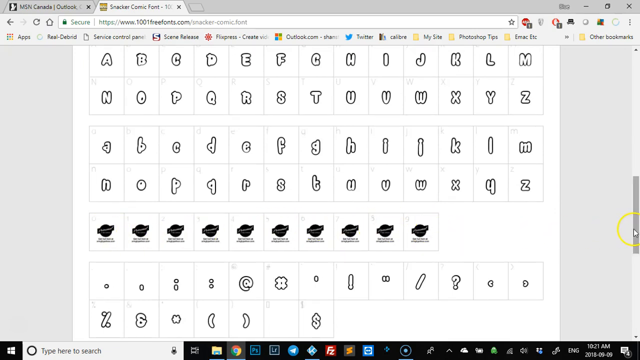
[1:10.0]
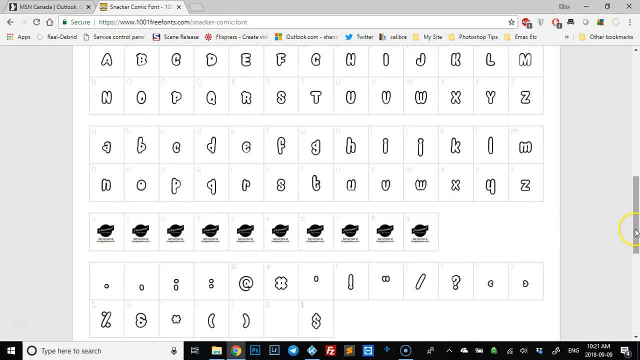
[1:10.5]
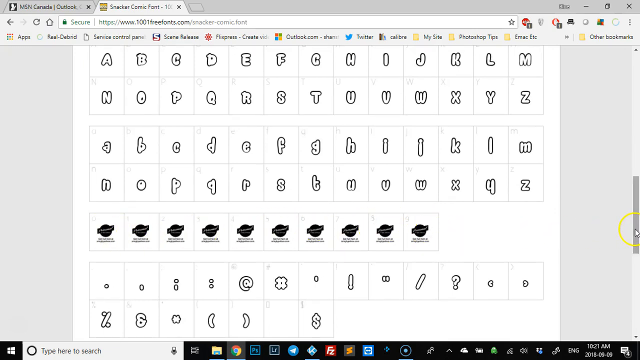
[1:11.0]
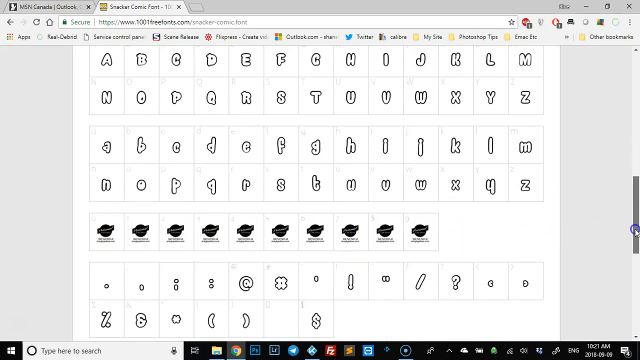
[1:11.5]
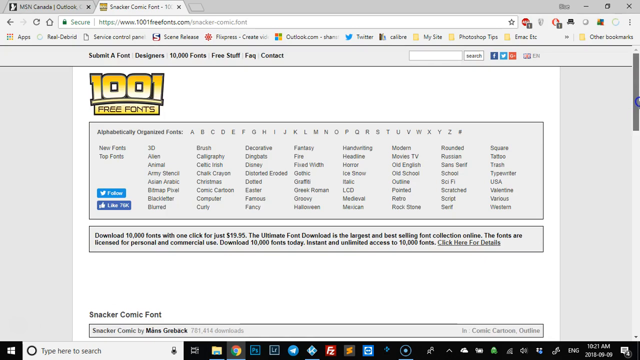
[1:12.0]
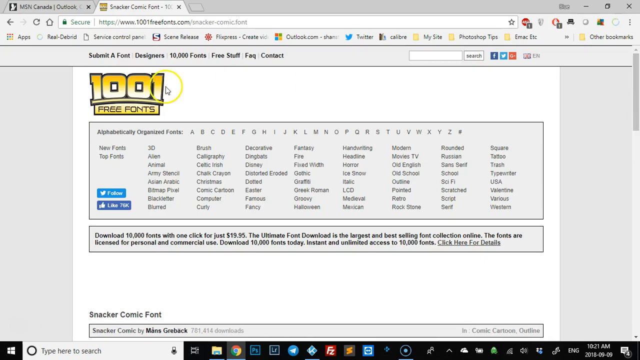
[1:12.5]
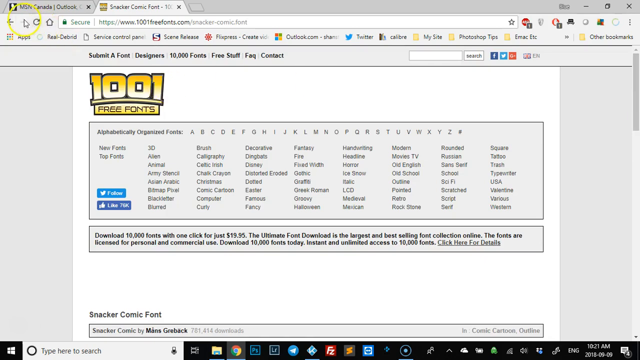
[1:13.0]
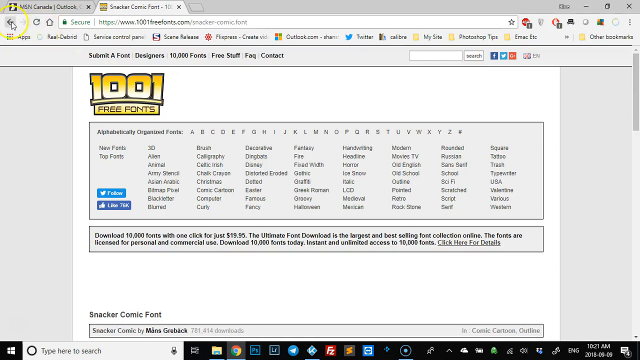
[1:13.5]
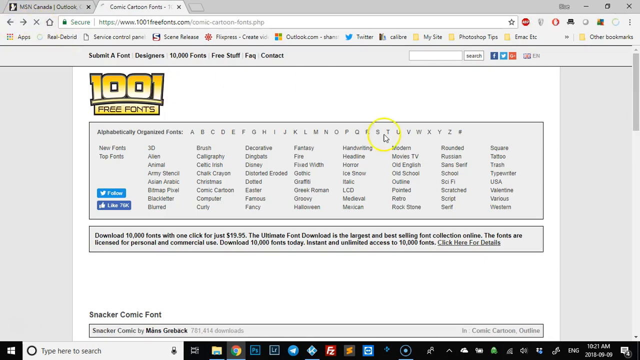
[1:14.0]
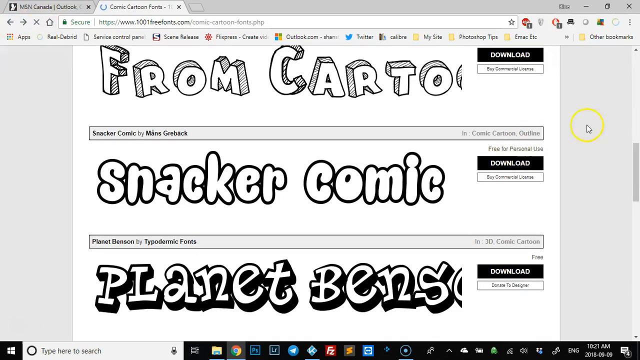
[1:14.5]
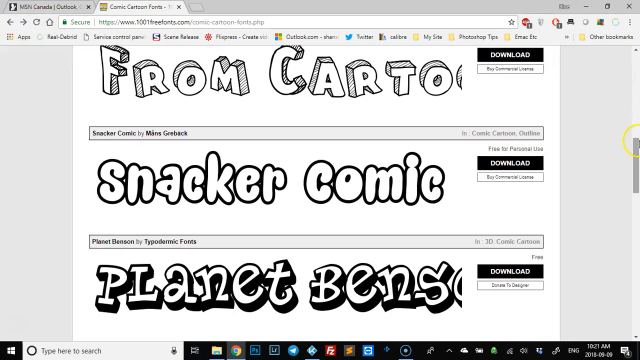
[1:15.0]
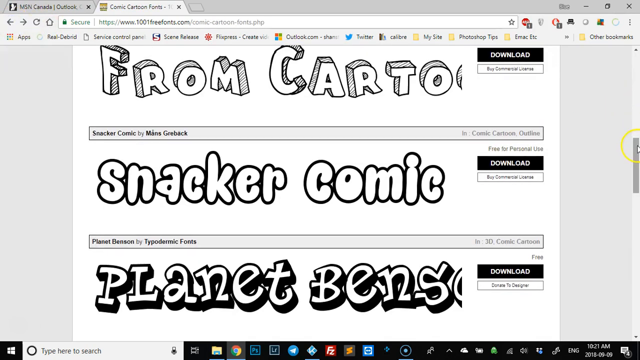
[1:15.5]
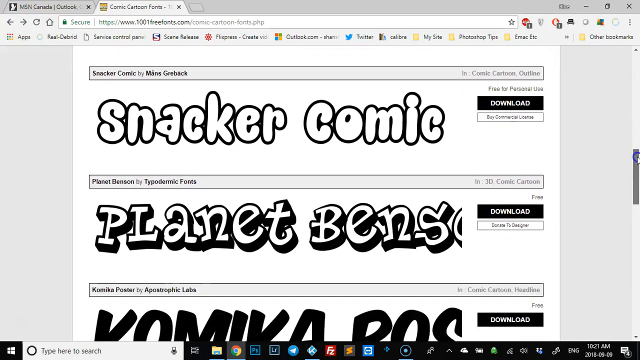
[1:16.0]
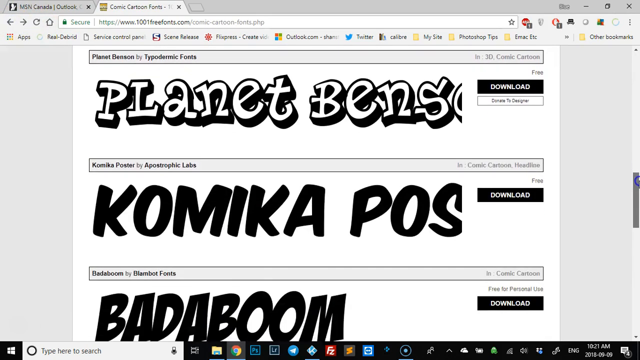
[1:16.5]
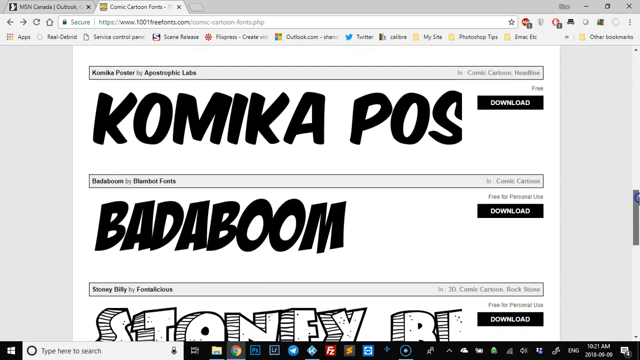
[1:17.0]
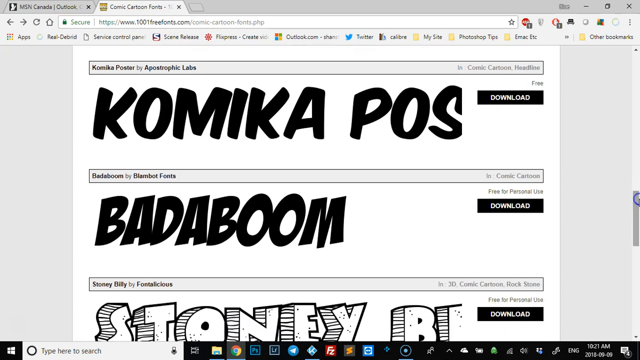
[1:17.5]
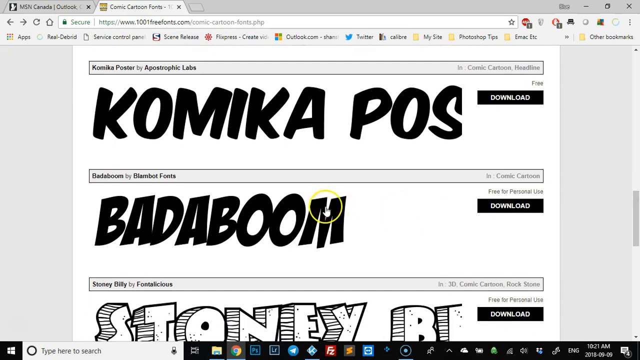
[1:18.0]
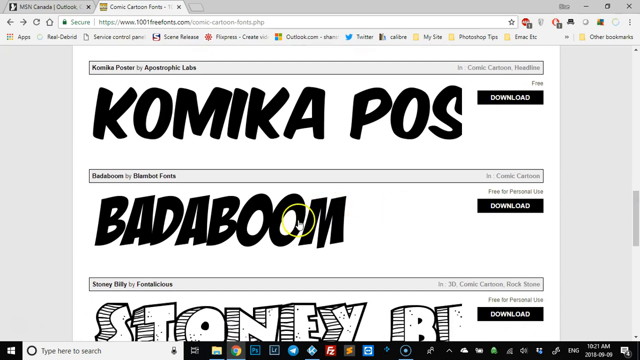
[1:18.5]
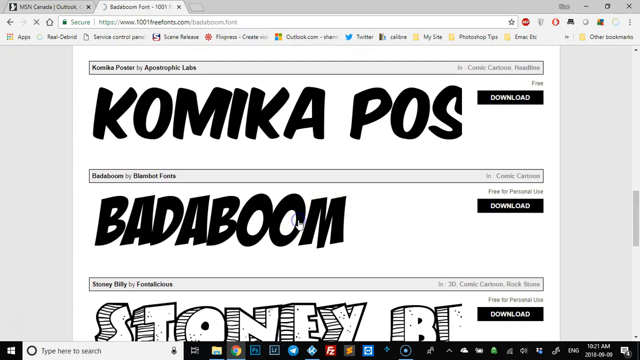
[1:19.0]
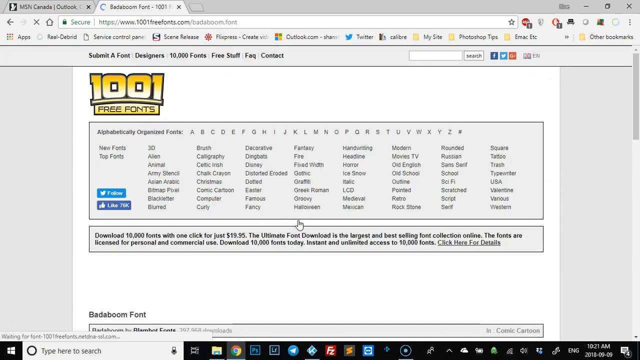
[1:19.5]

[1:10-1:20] A page for one particular font is shown; its name is not displayed, but each letter appears in the shape of that font, separated in its own small square area, with one area for the uppercase letters and another for the lowercase. The person quickly clicks off, returning to the 1001 Free Fonts home page, where the person's arrow is highlighted by a golden ring. The back arrow is pressed, leading to another page where the fonts are scrolled through, showing what they look like on their banners.